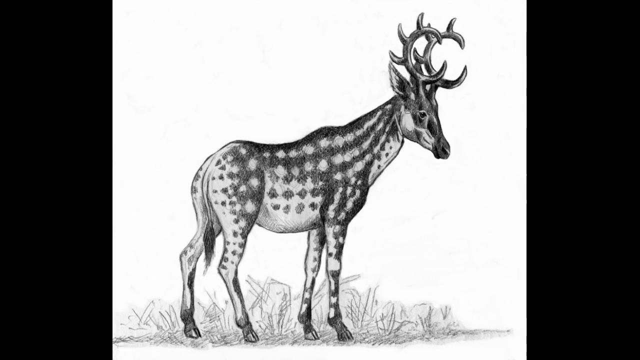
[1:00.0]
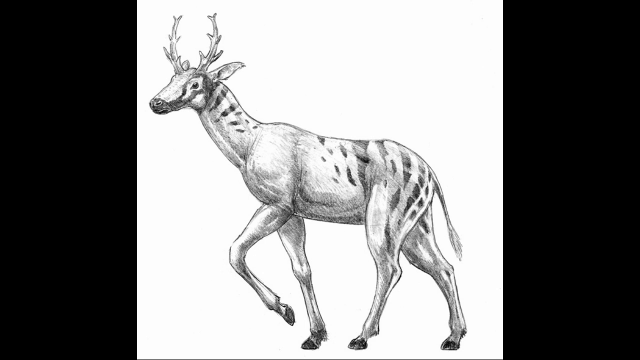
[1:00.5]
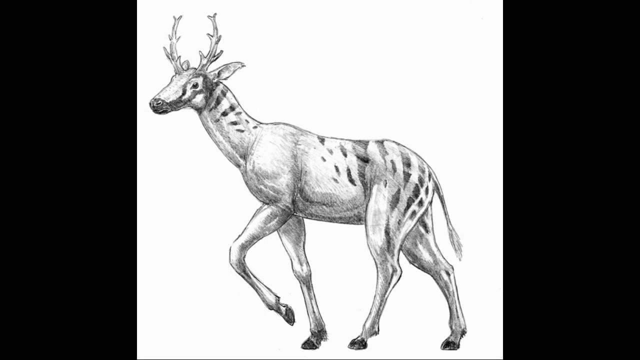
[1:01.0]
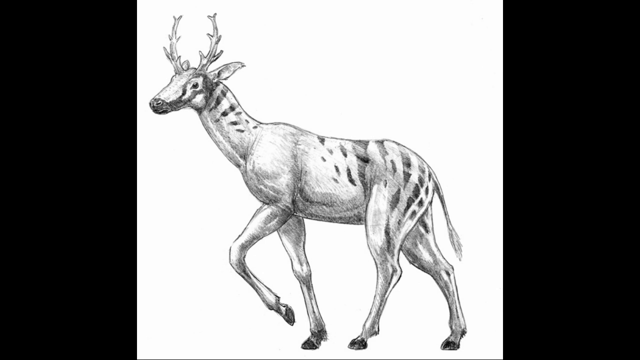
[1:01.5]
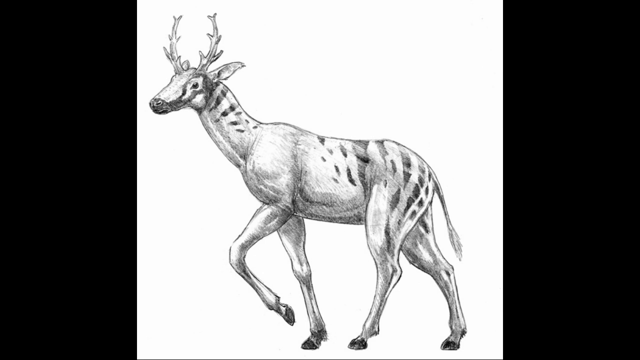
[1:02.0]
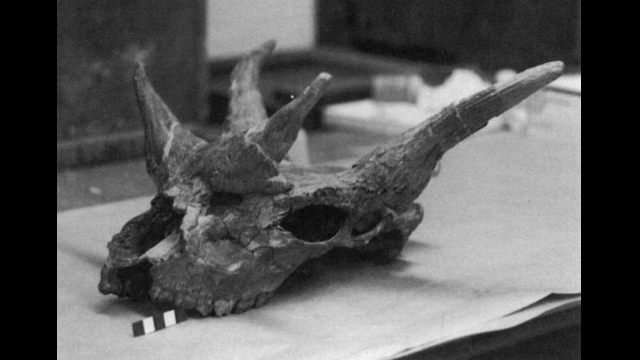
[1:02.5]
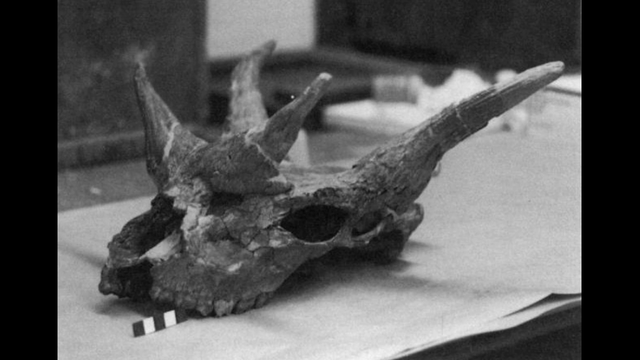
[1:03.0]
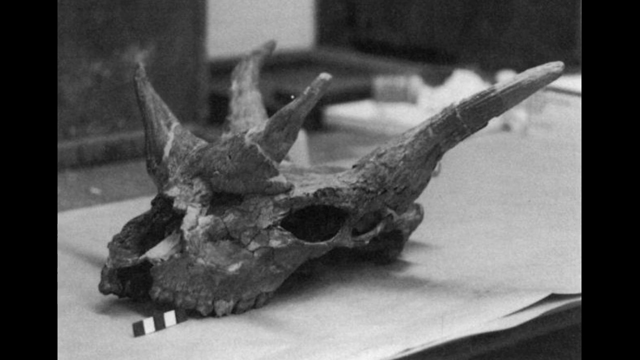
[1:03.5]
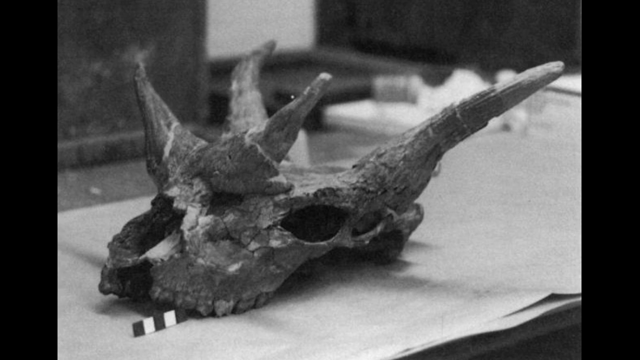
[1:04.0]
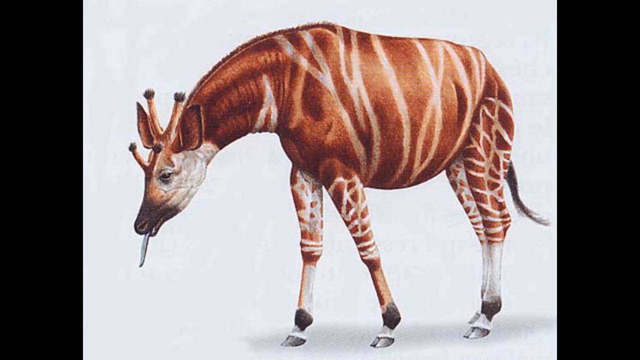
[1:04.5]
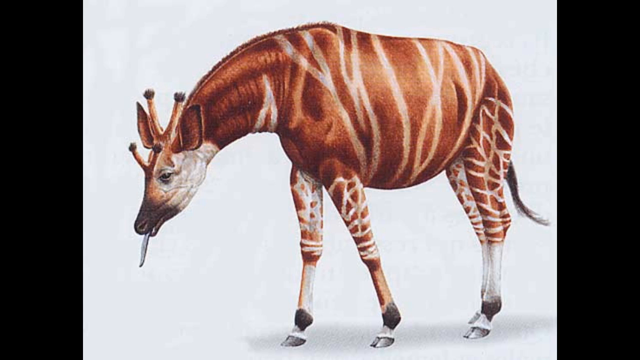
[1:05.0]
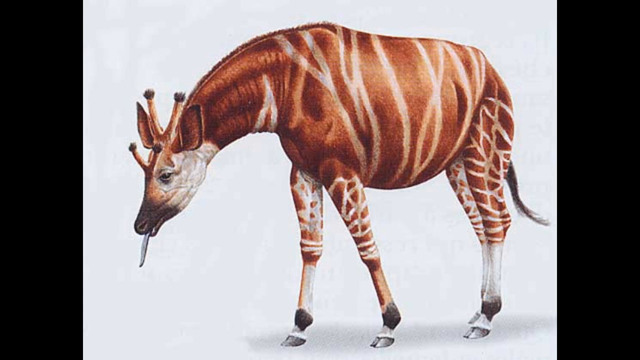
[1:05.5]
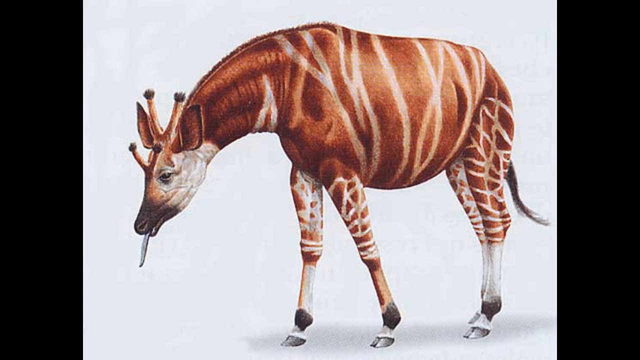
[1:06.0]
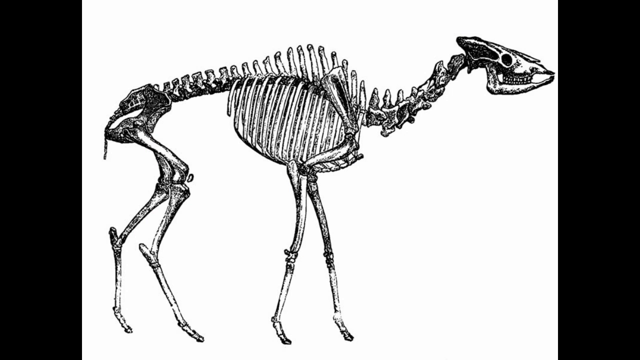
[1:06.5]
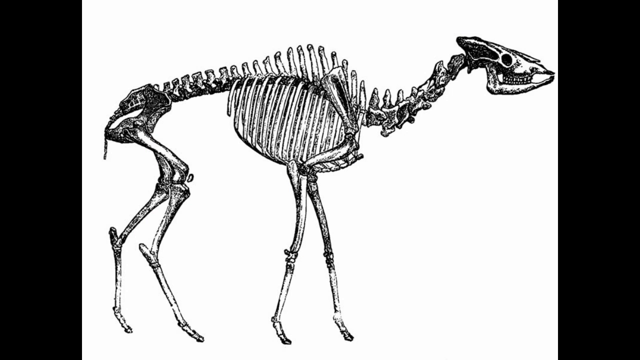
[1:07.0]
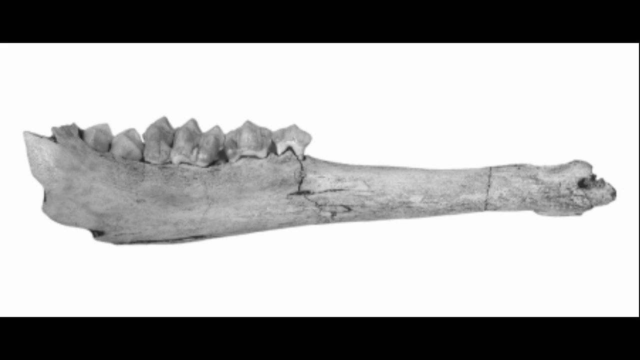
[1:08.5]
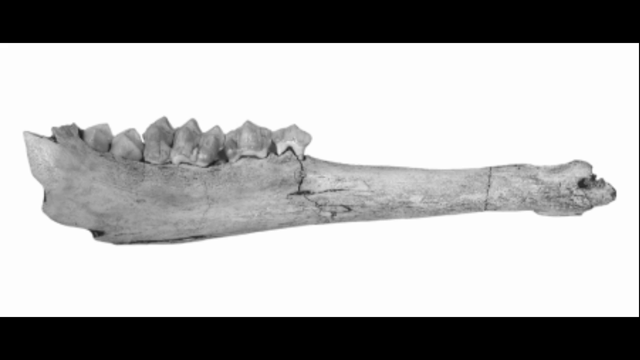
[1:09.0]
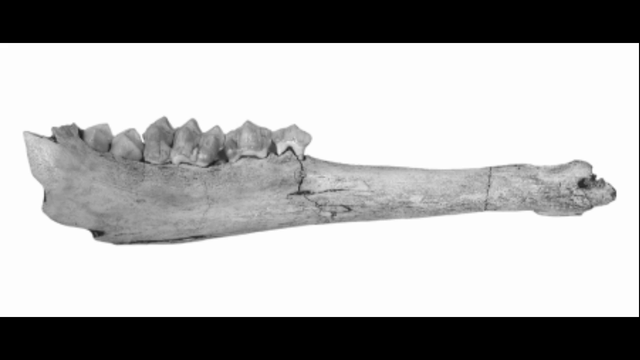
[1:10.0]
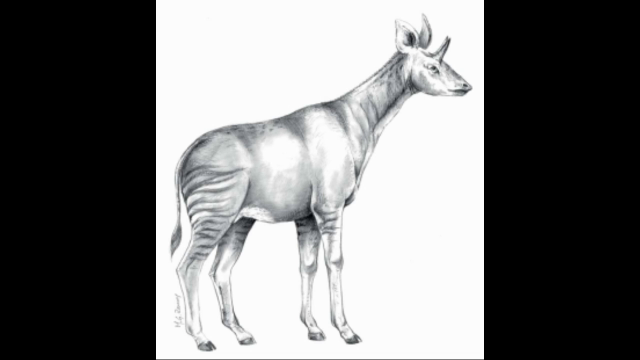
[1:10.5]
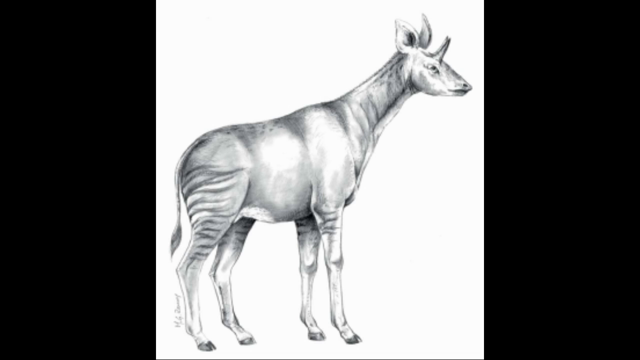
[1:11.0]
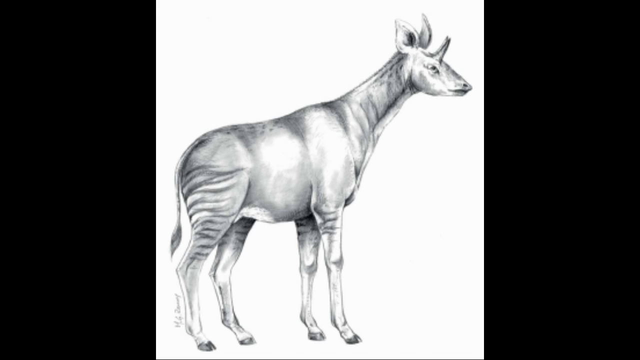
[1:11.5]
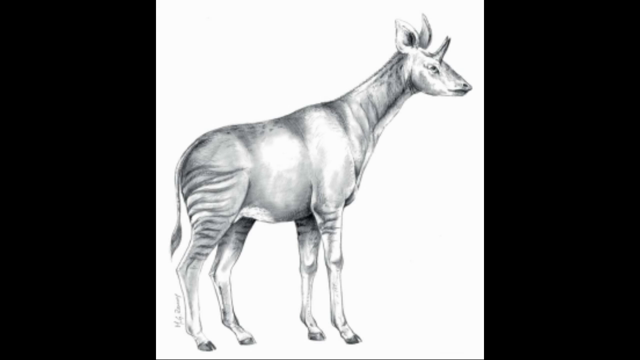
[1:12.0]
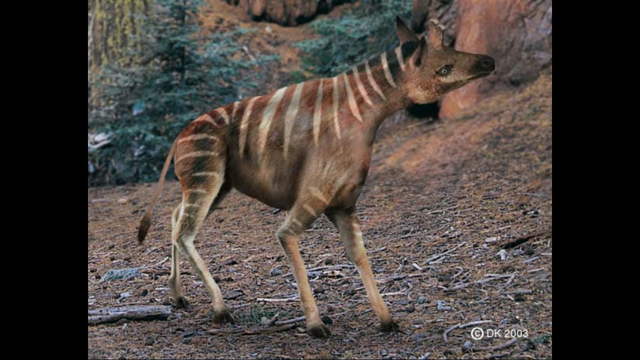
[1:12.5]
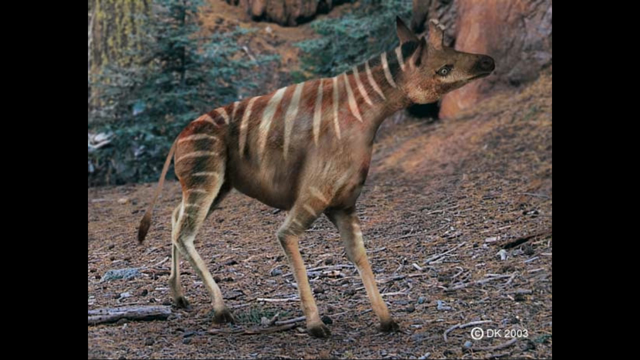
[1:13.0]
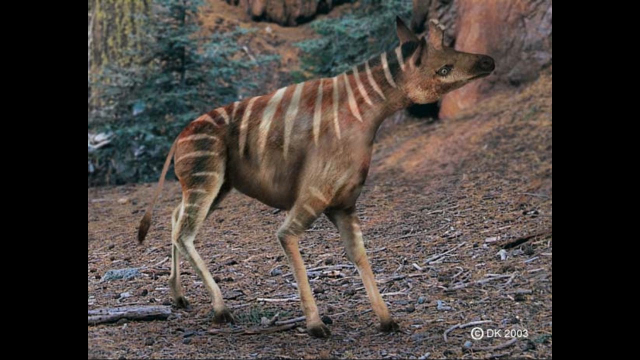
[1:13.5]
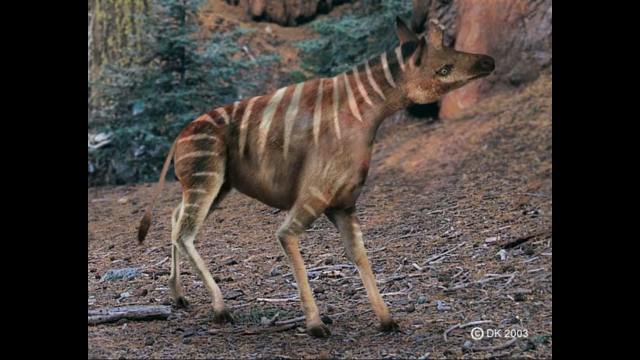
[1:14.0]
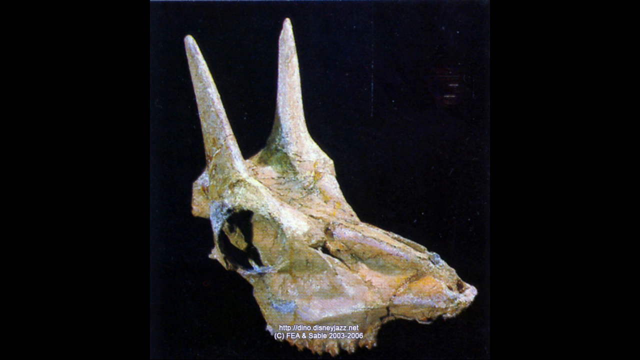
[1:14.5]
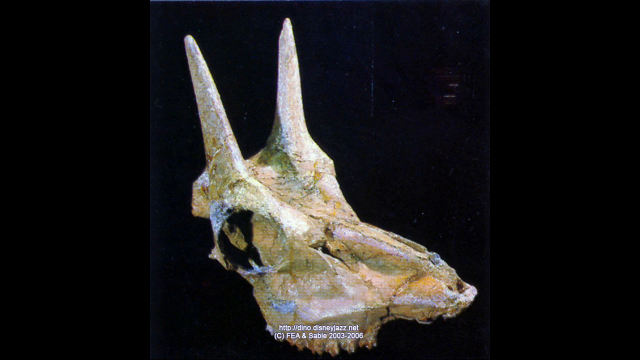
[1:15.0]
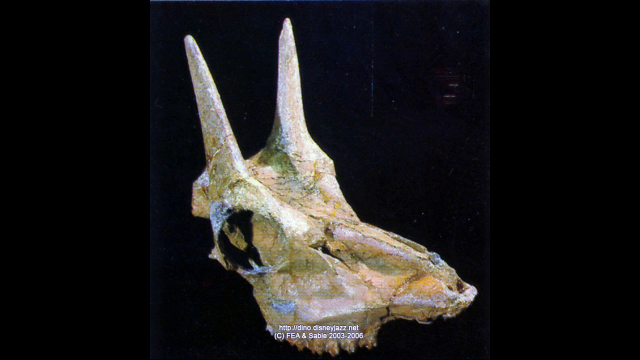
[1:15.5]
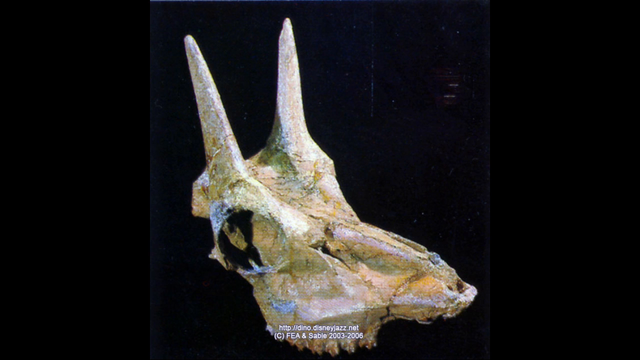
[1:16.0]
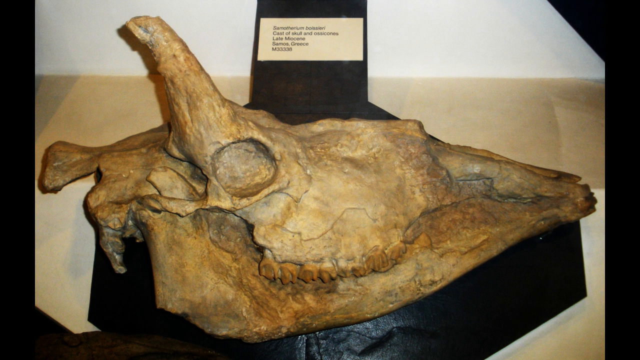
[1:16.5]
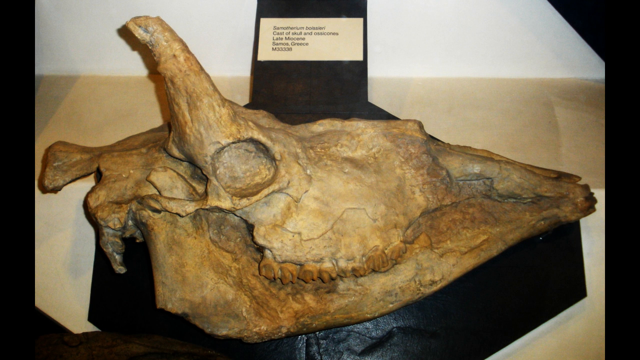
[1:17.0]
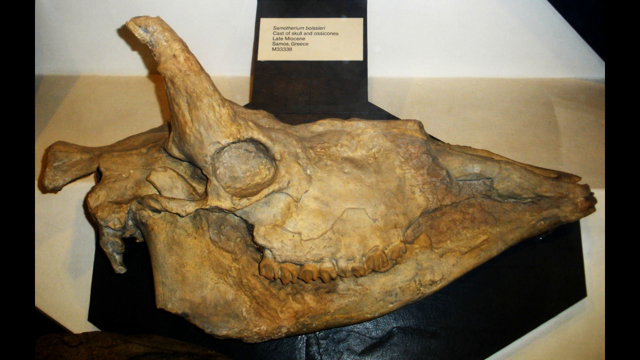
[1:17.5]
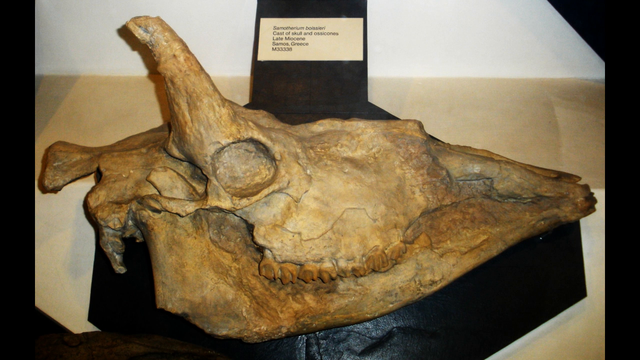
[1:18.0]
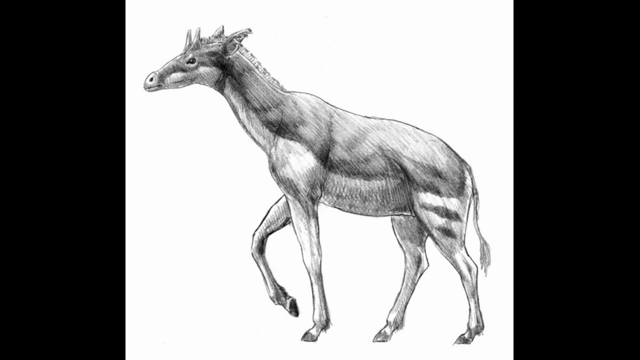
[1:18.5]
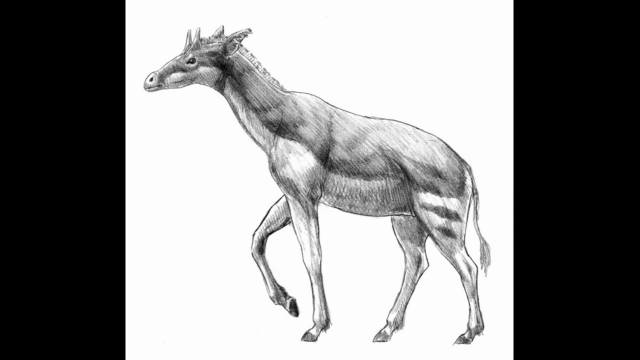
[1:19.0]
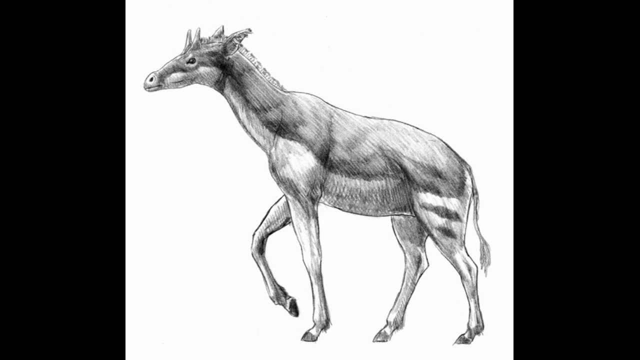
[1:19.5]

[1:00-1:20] An artist's sketch shows a deer-like creature facing left. Next is a black-and-white photo of what looks like one of the ancient creatures, a skull with four horns on its head resting on what looks like a mat. A transition leads to another artist's rendition of one of the ancient giraffe-like creatures, with a large black tongue out of its mouth, an orange coat with stripes going across, and four horns that look somewhat like giraffe horns. A black-and-white sketch of a bone facing right follows, then what looks like a jawbone with teeth visible along the bottom. Another sketch shows one of these ancient deer-giraffes, followed by a computer-generated image of the same creature: brown with stripes, apparently in a forest. Another skull appears, seemingly in a museum where it is being archived, with a small plaque on top of it. Finally there is another sketch, with the pencil lines visible, of a creature looking to the left.